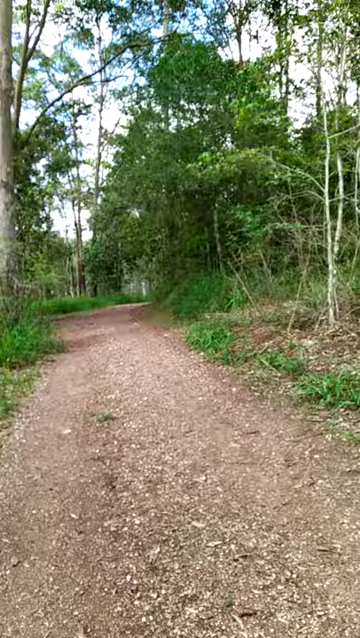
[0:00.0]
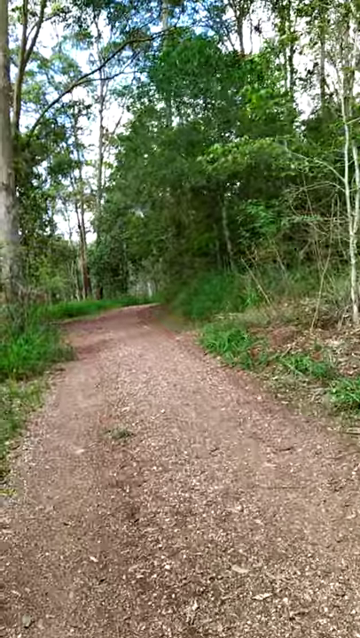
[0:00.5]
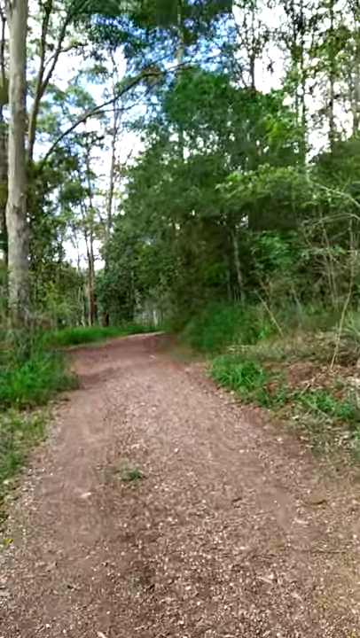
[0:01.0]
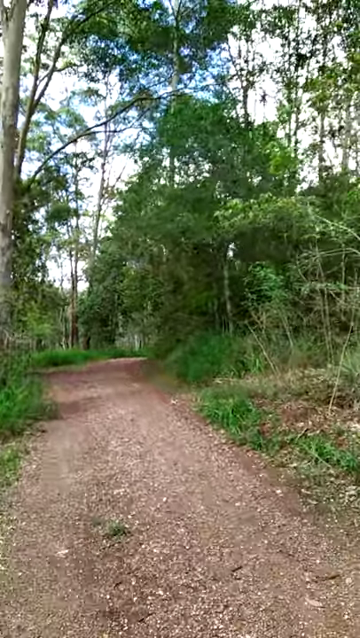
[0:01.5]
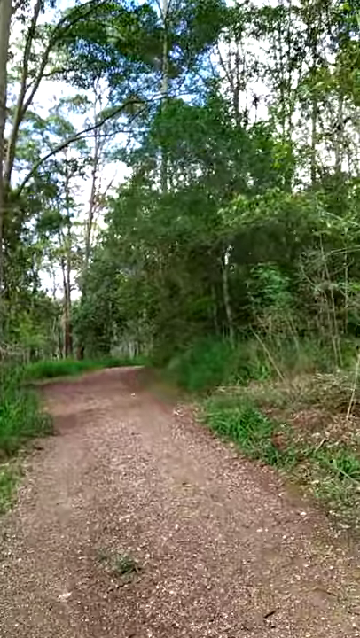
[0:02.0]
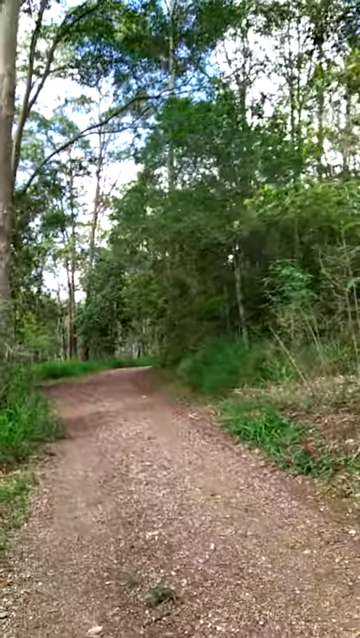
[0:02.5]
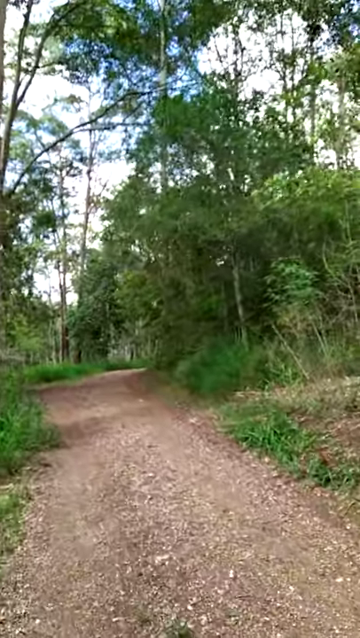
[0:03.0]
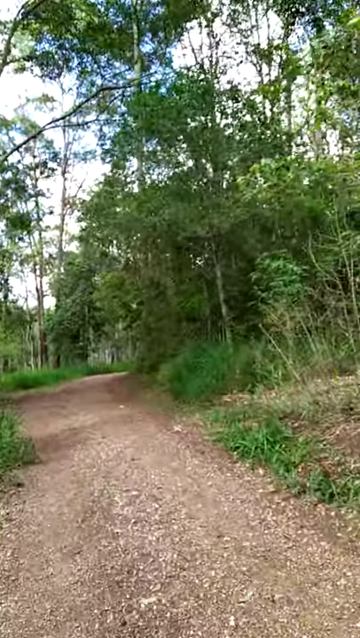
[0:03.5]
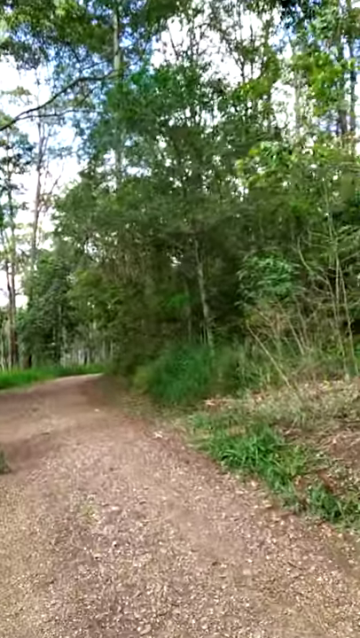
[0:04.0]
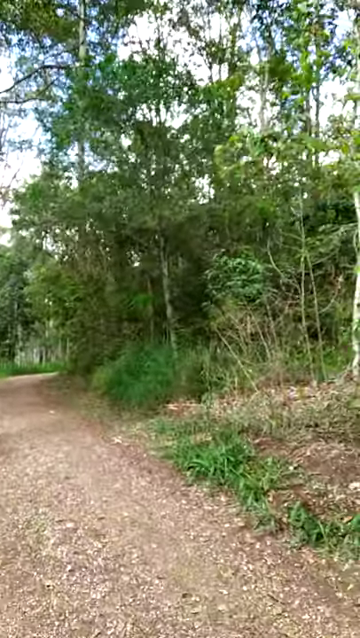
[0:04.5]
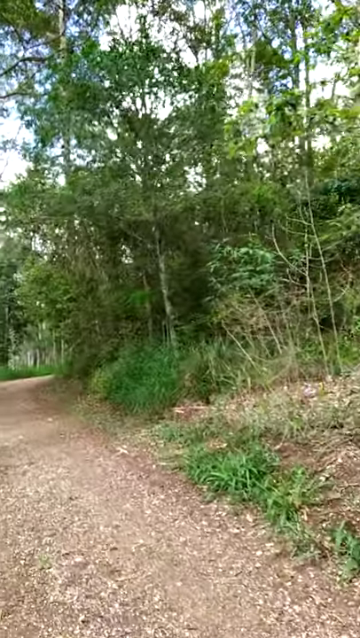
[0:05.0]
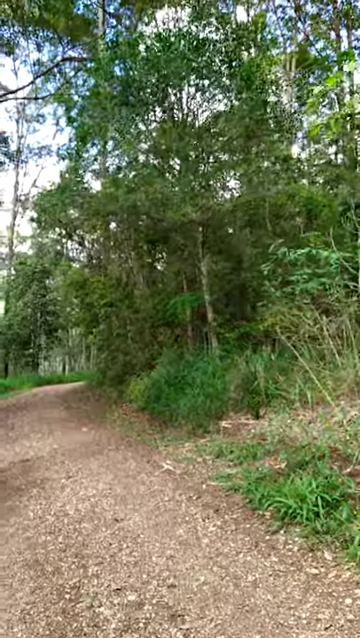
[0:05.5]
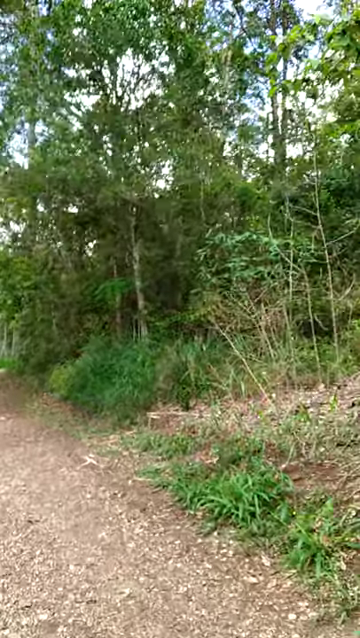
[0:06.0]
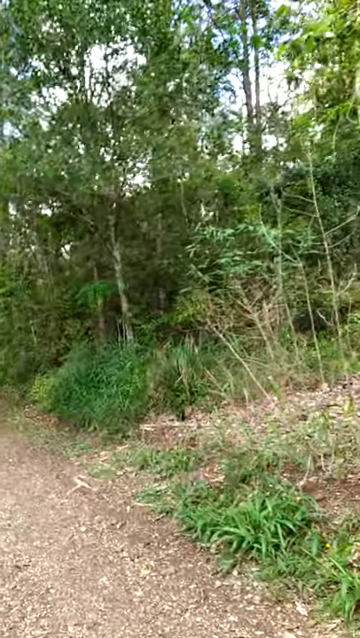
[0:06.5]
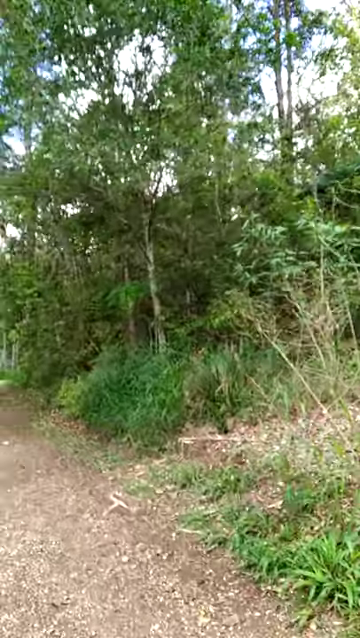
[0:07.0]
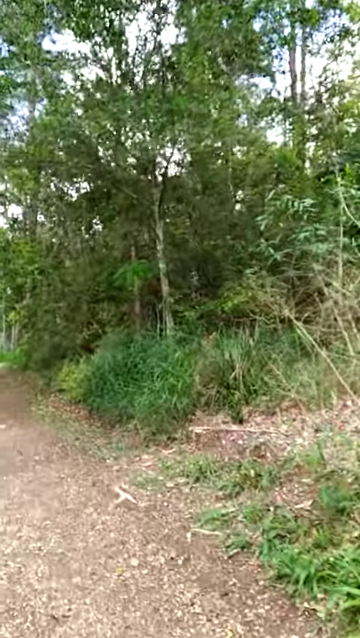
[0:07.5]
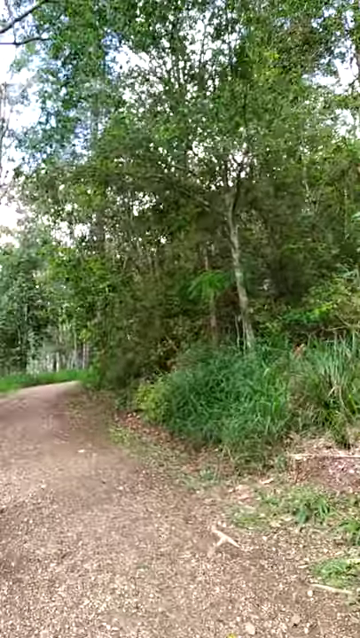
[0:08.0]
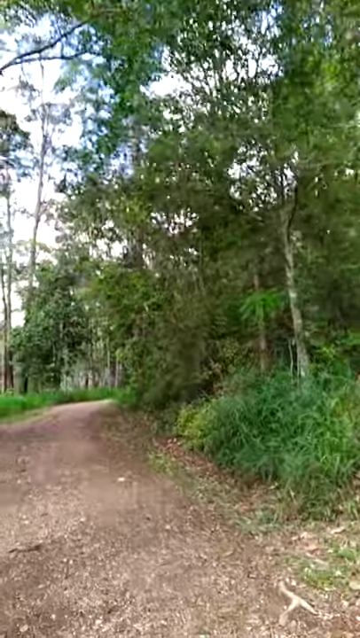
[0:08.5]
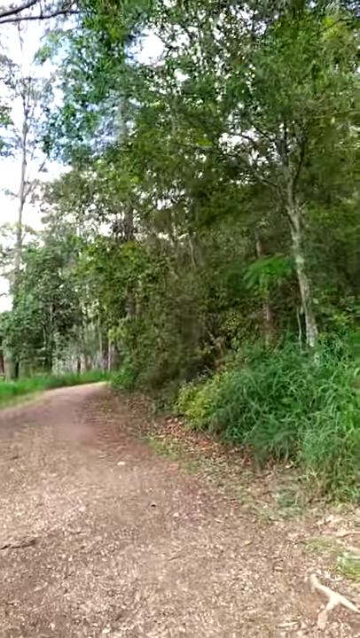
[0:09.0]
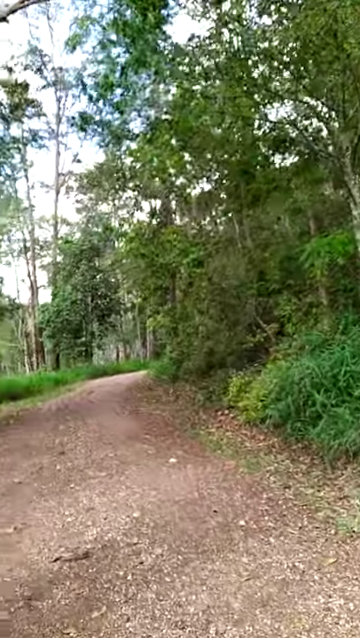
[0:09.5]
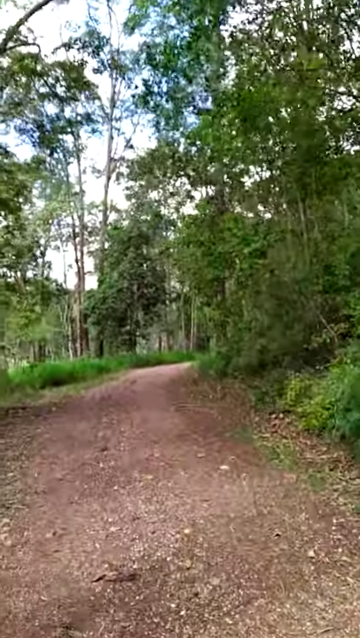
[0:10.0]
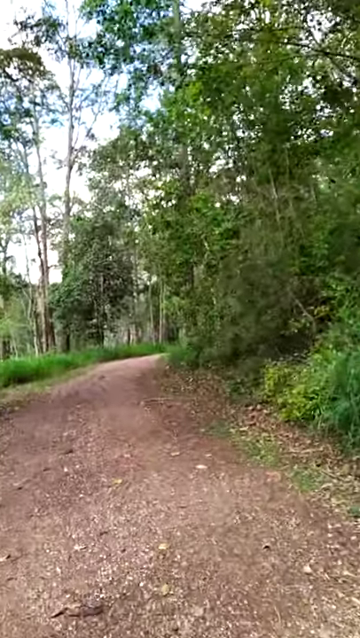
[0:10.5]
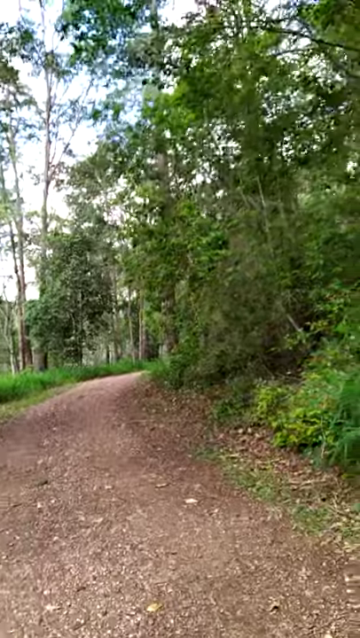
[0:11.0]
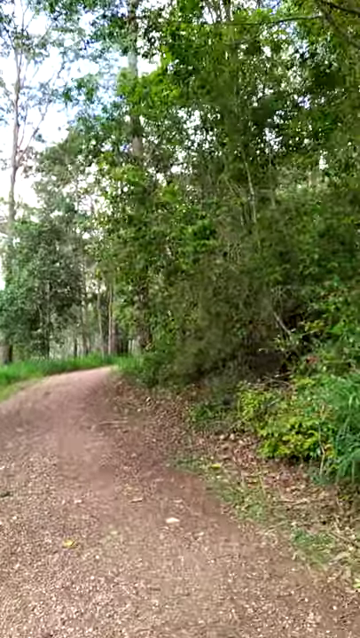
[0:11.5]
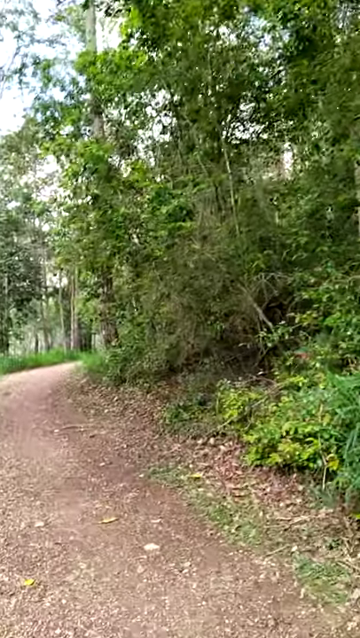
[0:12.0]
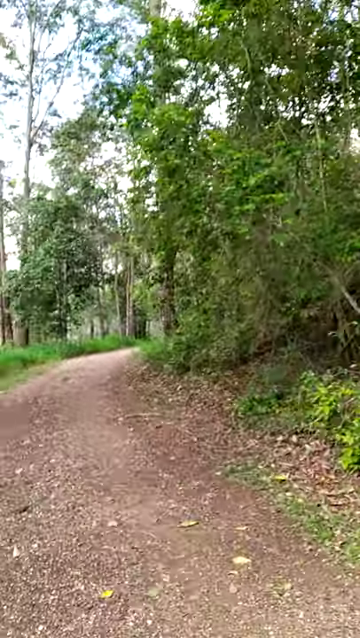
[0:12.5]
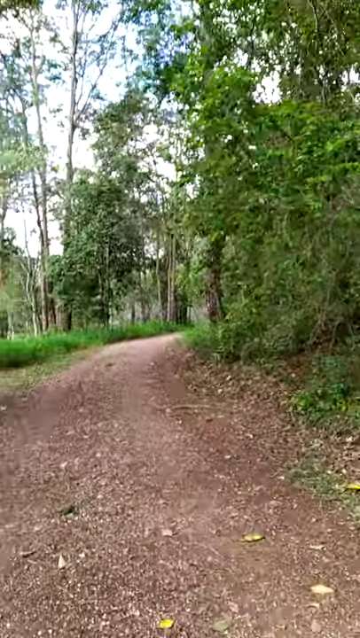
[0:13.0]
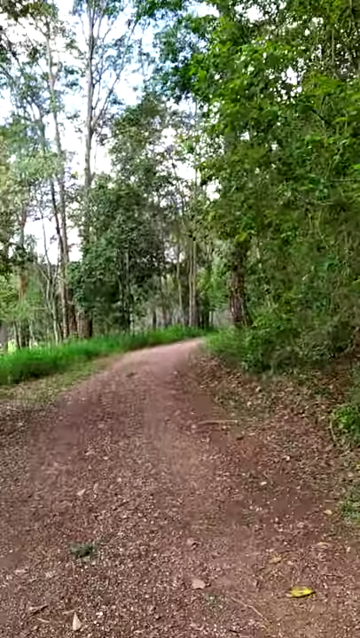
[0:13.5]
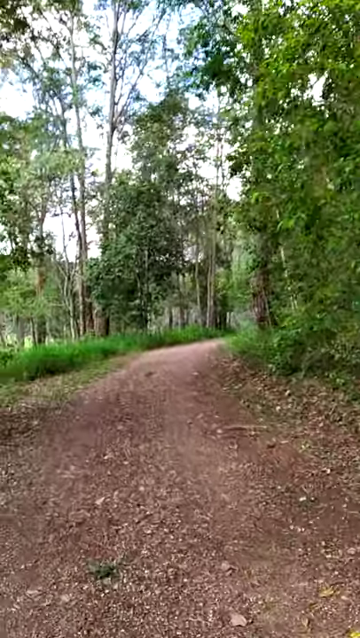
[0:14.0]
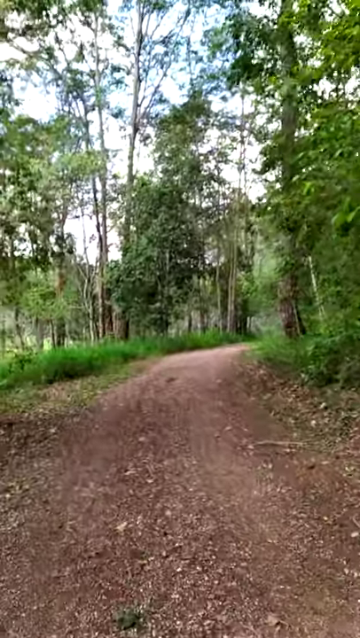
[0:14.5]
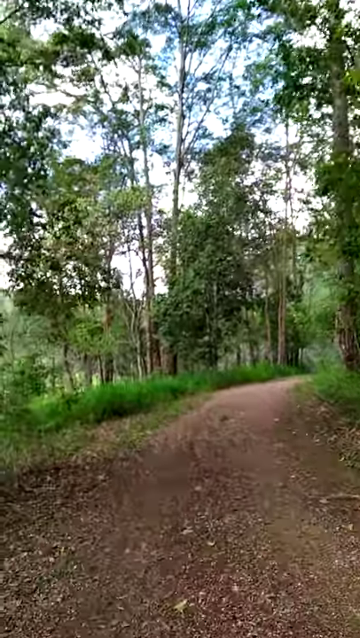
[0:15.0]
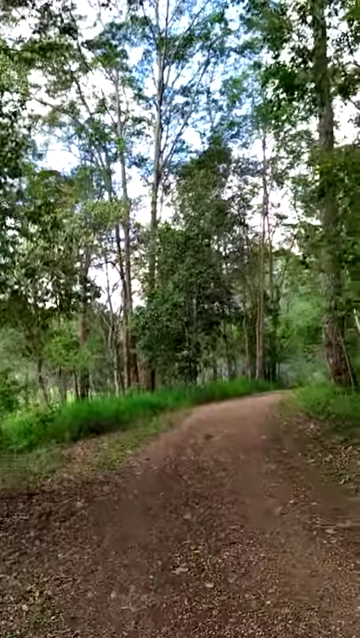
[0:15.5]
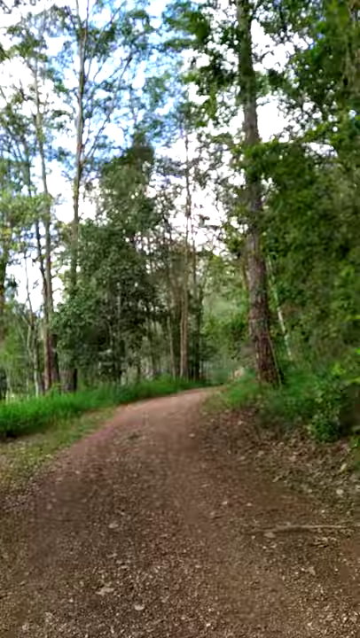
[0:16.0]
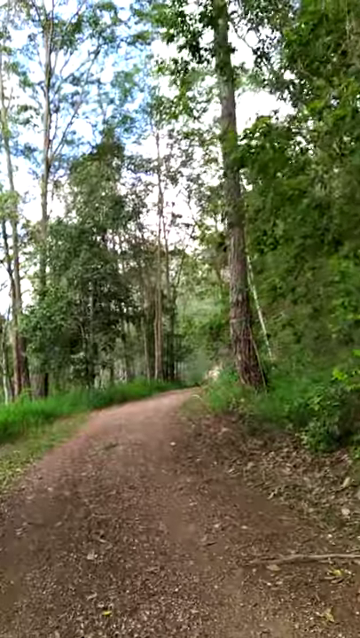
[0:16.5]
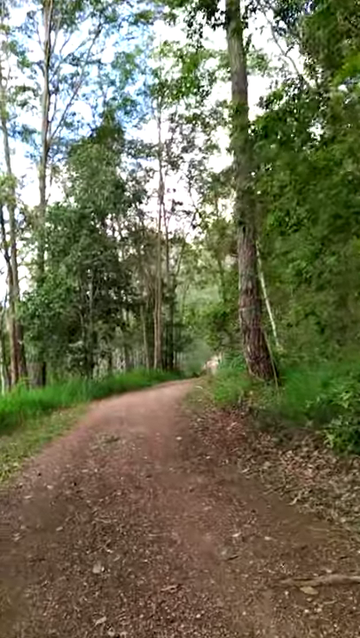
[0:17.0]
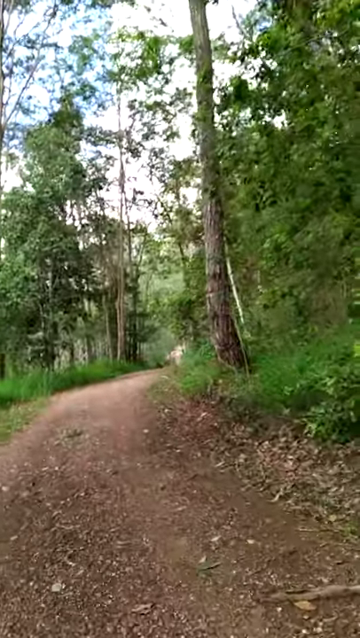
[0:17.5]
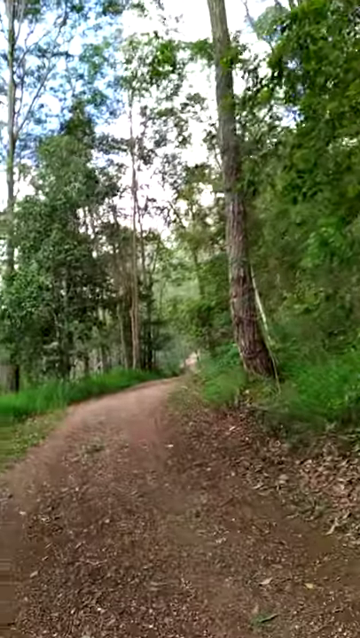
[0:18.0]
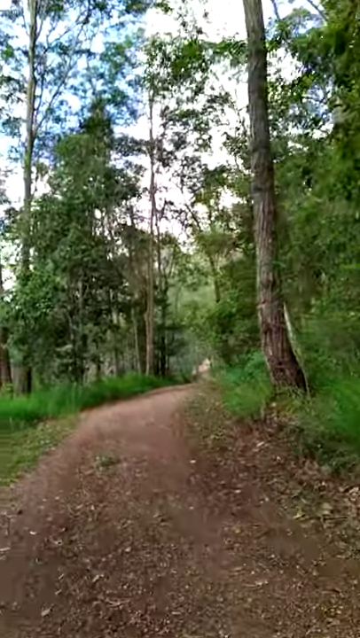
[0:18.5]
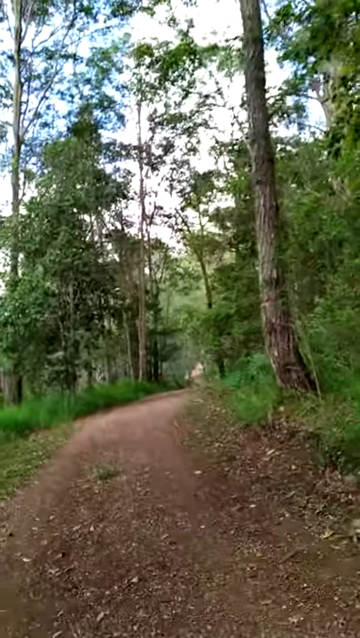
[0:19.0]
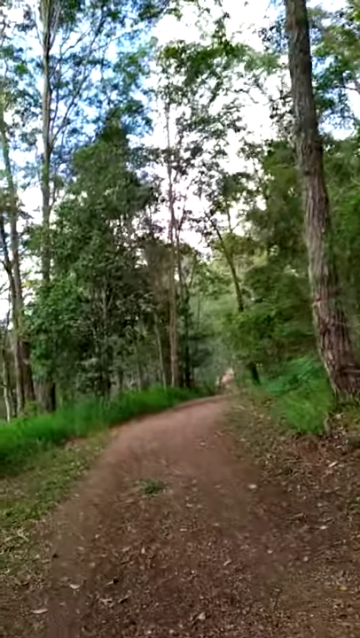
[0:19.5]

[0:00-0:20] The video appears to be a first-person perspective of someone going for a walk along a narrow, light brown dirt path that seems to have some small rocks and pebbles on it. On the left and right sides of the path is a fairly dense forest area, with small bright green bushes and many tall trees with green leaves. It looks to be a bright day; the sky, which looks sort of bright white, is mostly covered by the tops of the trees. The person seems to be walking down the path while filming, sort of looking around at the scenery.